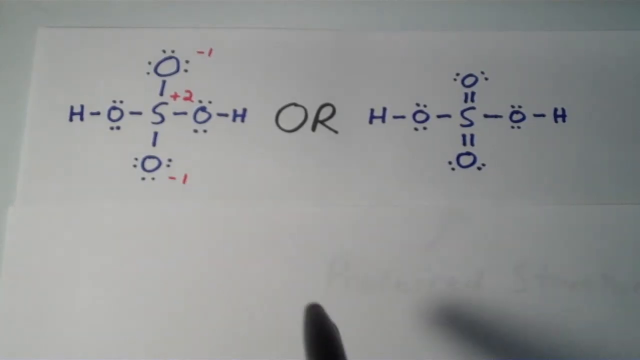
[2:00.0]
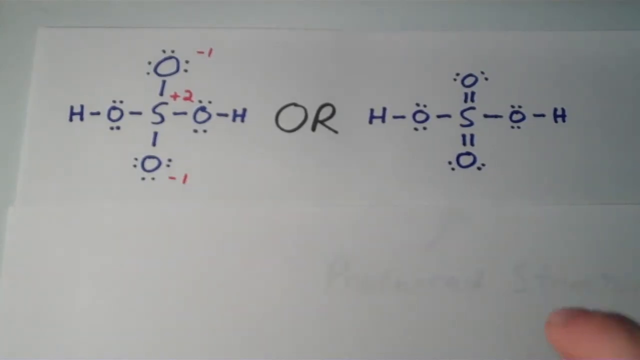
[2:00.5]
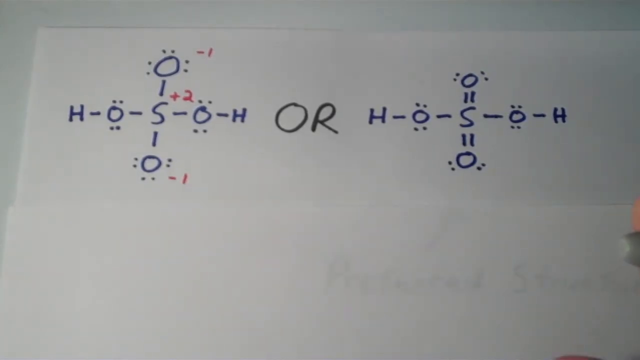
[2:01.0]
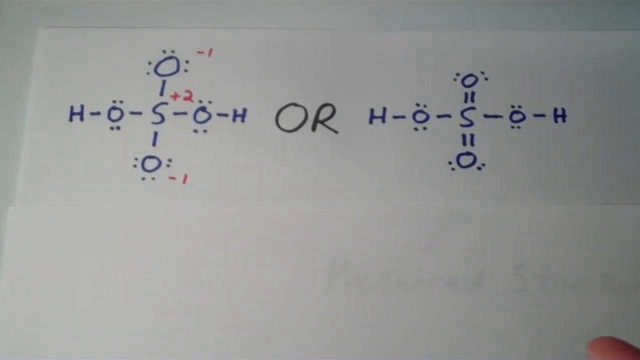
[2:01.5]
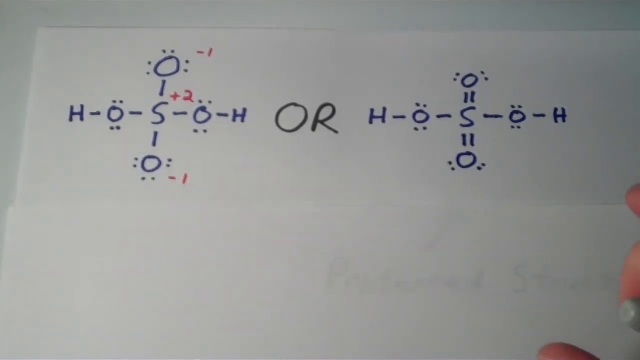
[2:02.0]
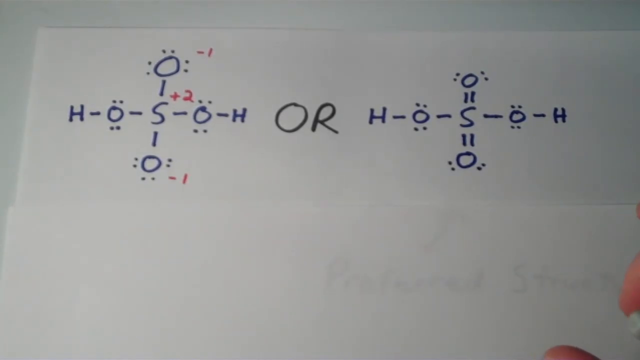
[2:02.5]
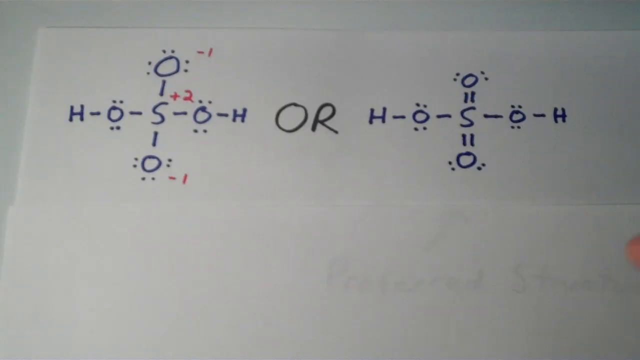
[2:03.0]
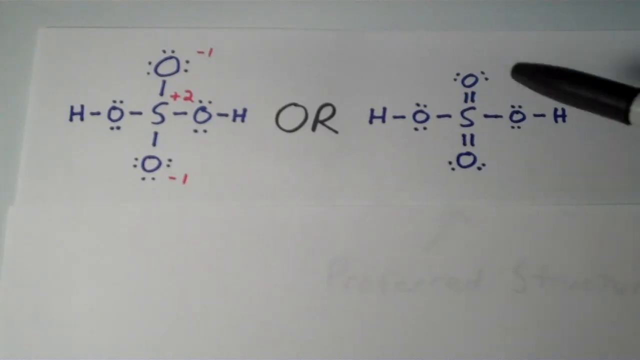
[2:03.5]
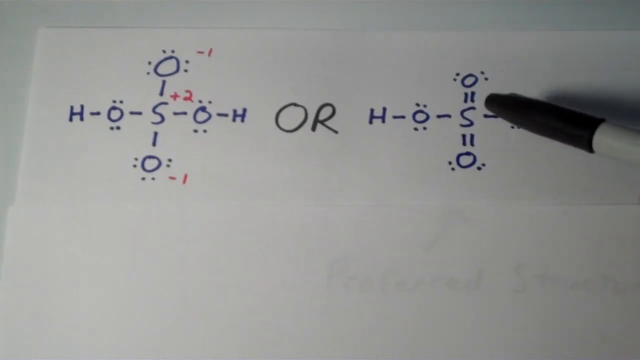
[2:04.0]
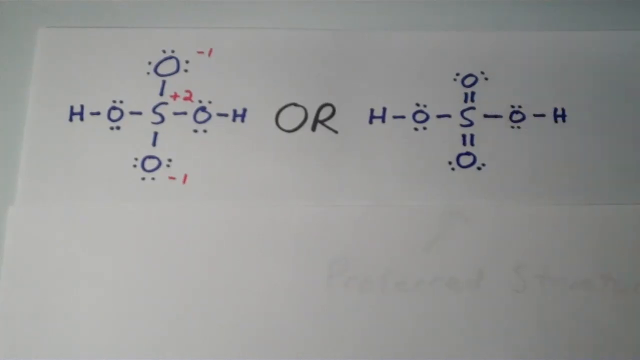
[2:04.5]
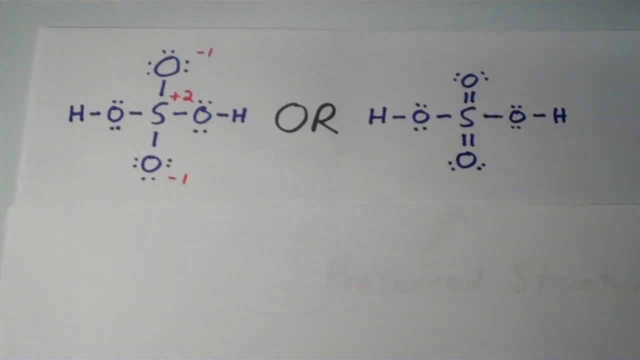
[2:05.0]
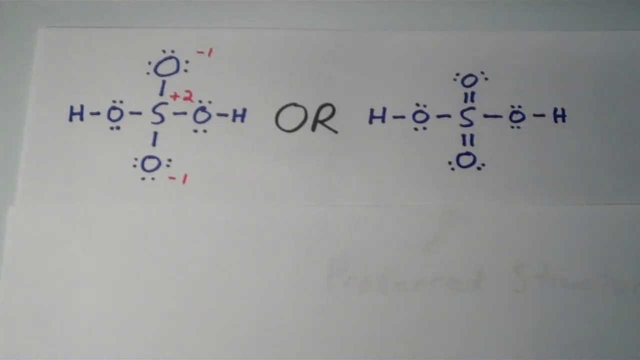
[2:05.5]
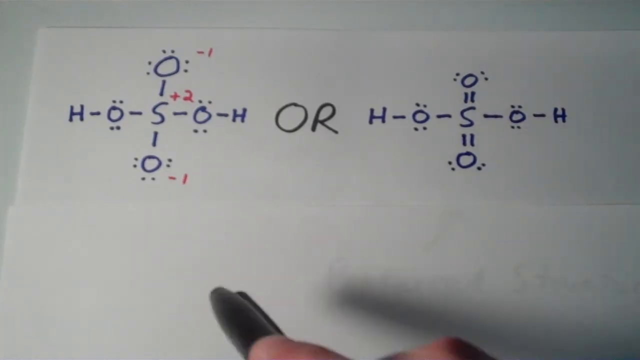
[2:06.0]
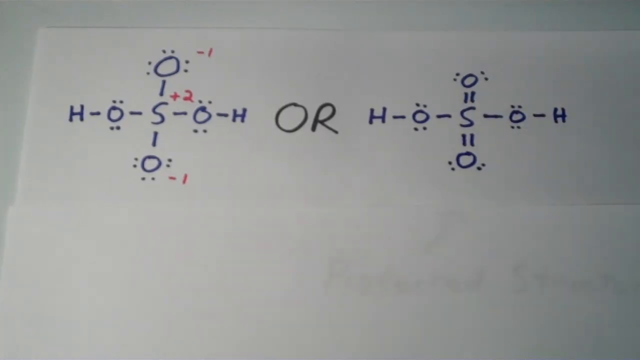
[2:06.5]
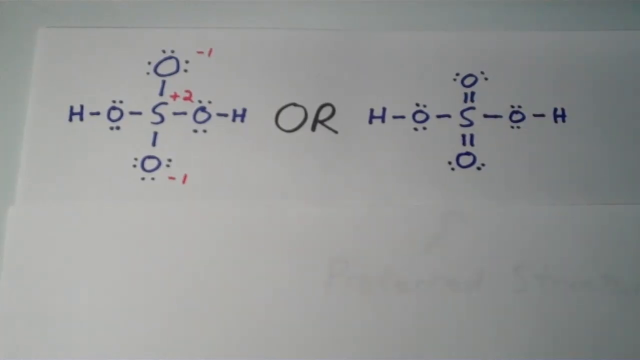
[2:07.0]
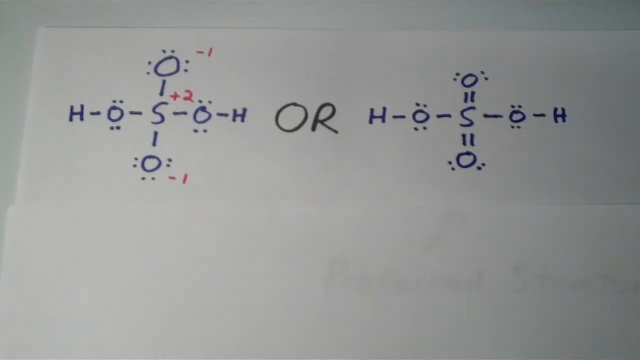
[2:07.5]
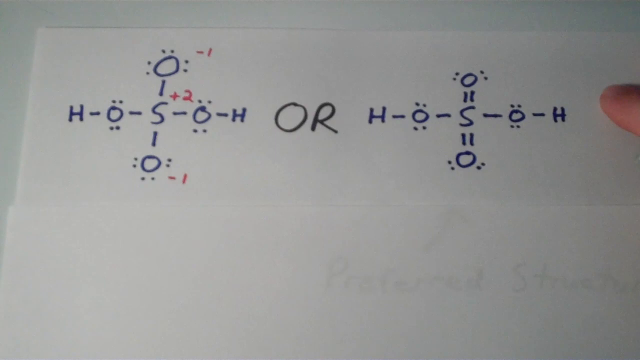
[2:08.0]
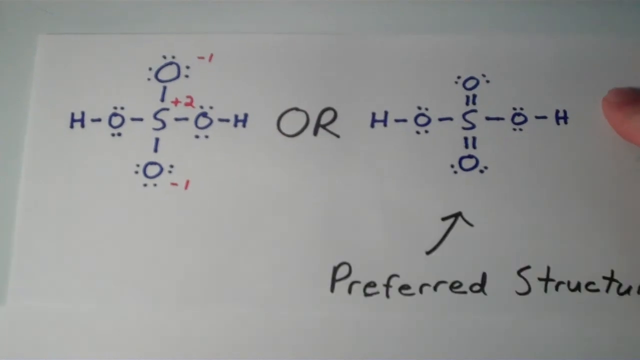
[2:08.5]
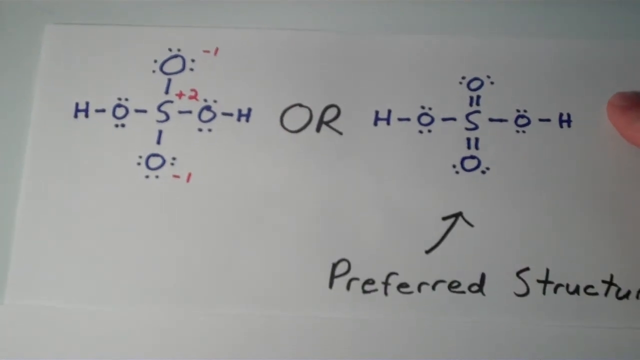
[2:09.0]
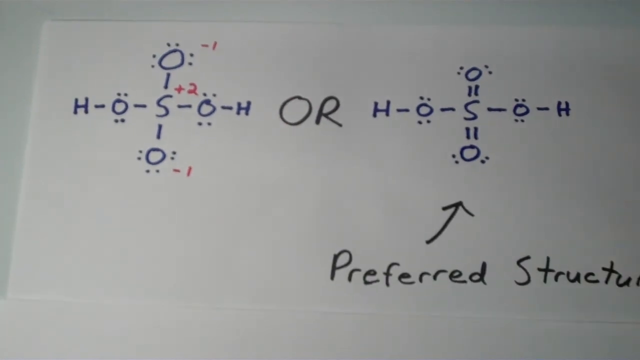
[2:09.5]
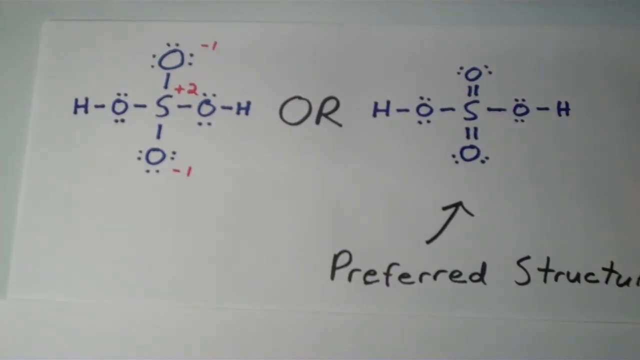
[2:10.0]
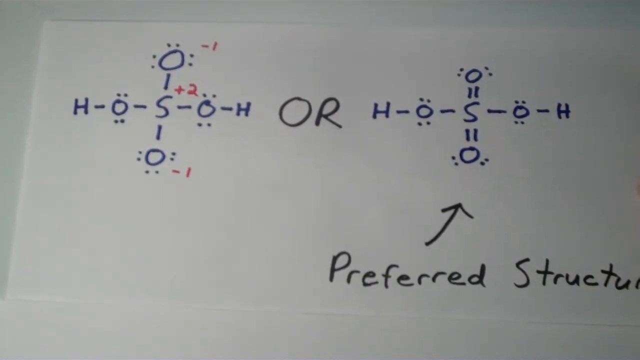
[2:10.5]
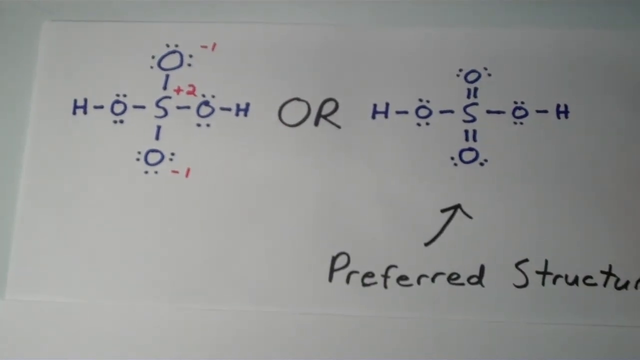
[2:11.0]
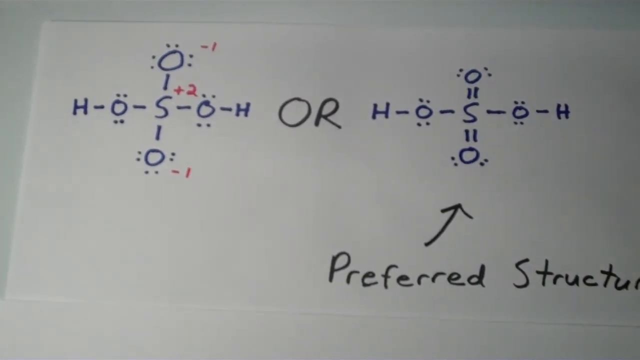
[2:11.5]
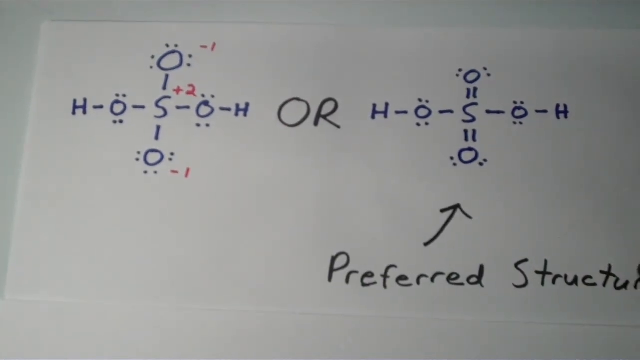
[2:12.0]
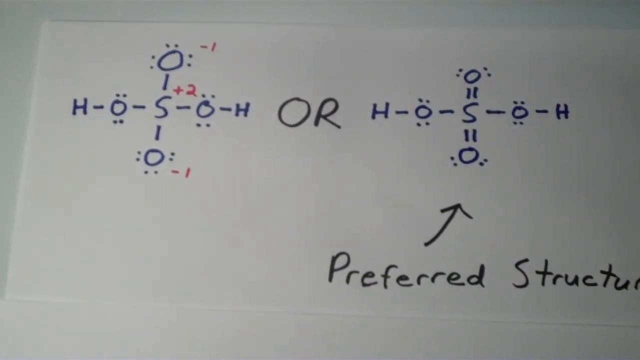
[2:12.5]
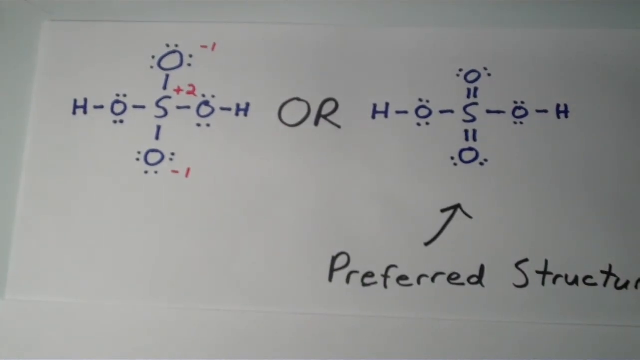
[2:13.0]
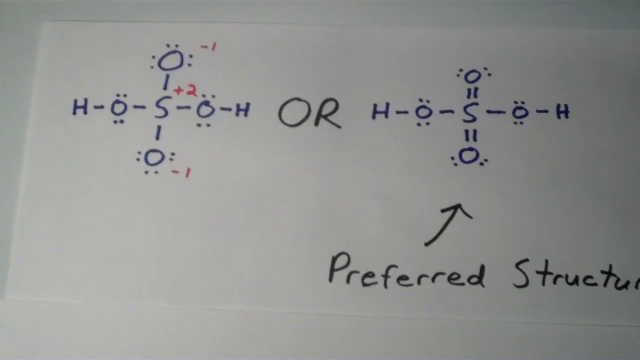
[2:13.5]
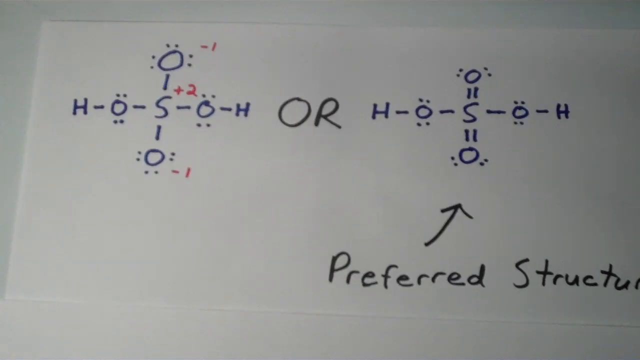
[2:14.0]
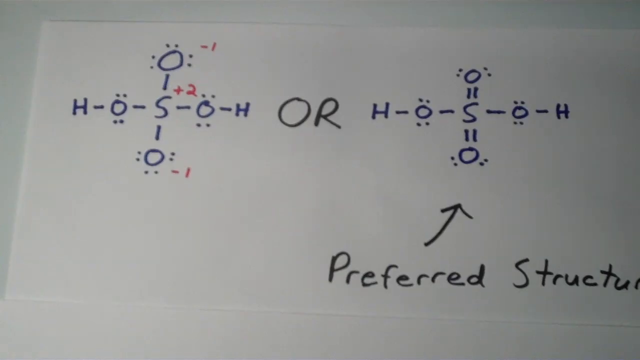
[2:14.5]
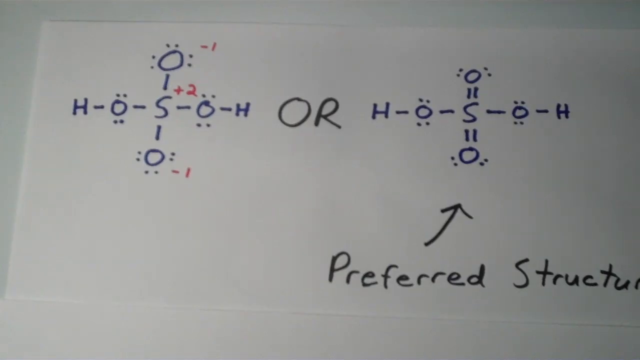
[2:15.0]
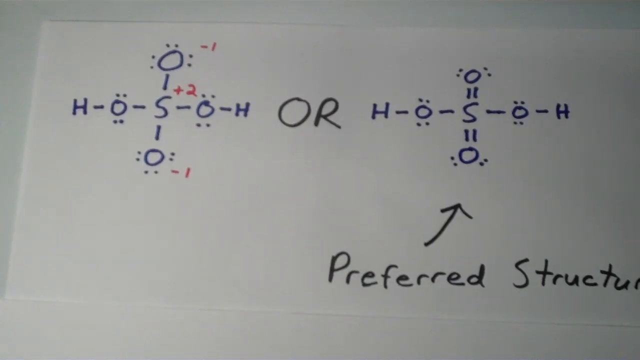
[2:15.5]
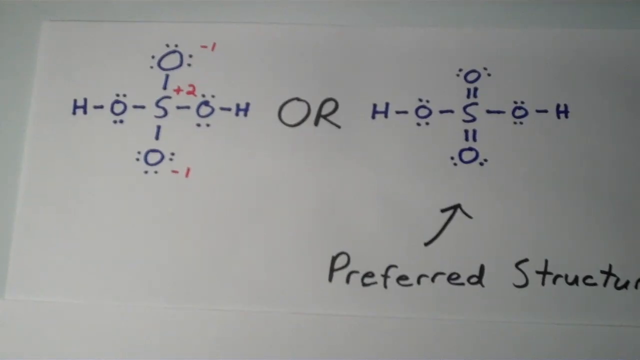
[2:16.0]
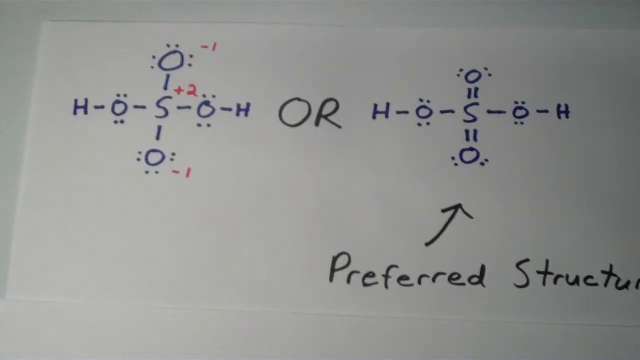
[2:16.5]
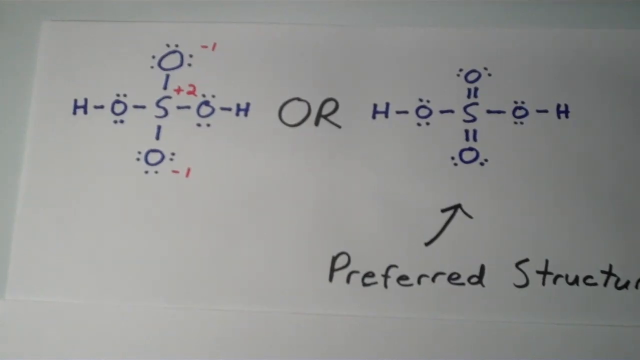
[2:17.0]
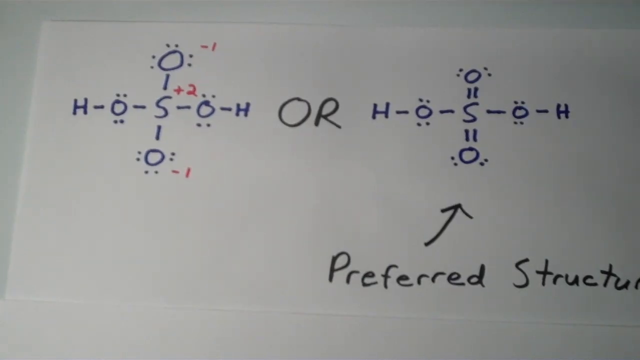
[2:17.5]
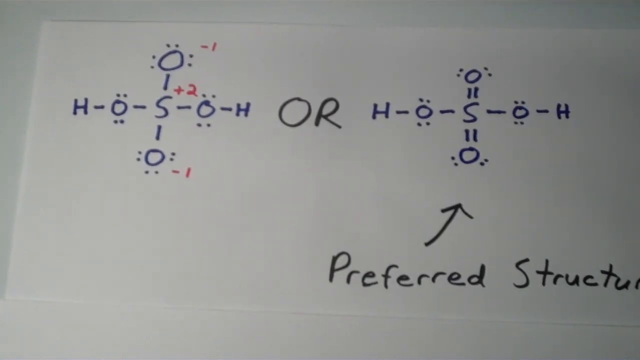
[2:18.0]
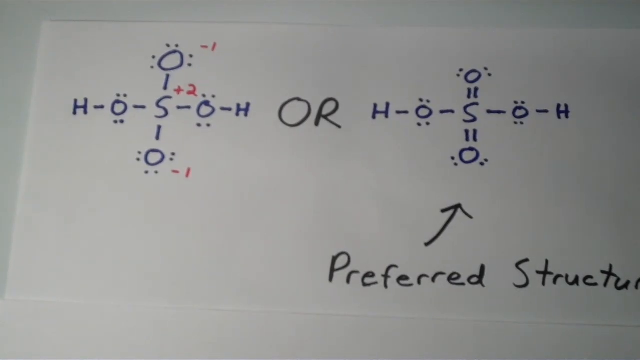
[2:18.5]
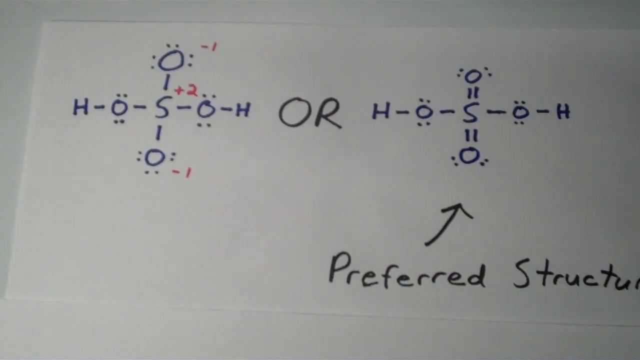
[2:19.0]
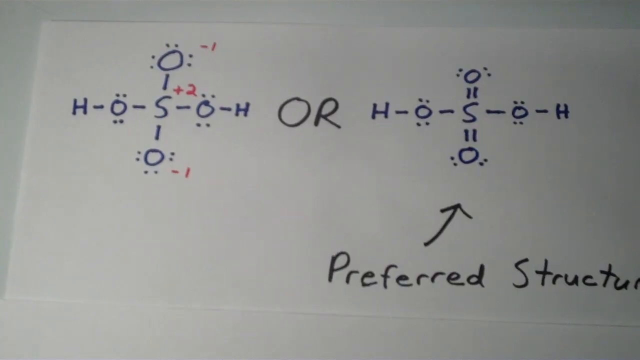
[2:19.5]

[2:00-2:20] The instructor goes over both molecules, then writes "preferred structure" for the second Lewis structure in black ink or black marker, with an arrow pointing up at the structure. The handwriting is at the bottom right. Everything is on a white piece of paper, not a chalkboard or whiteboard.